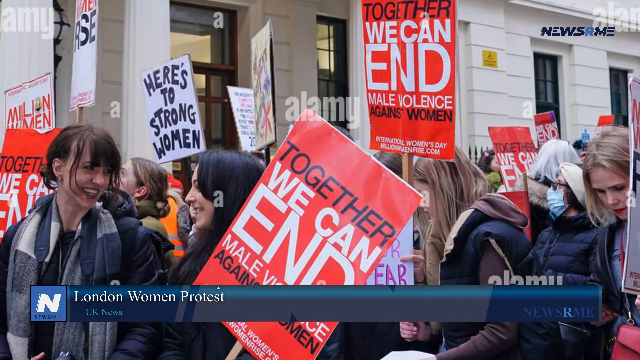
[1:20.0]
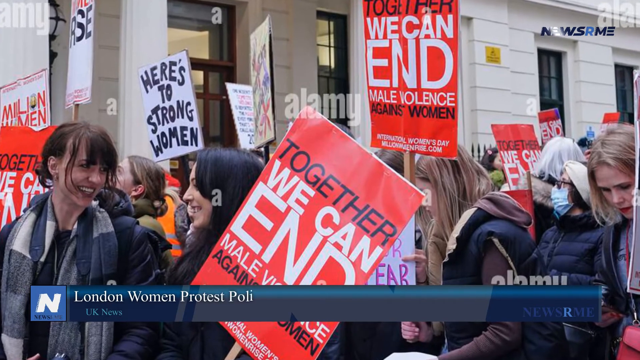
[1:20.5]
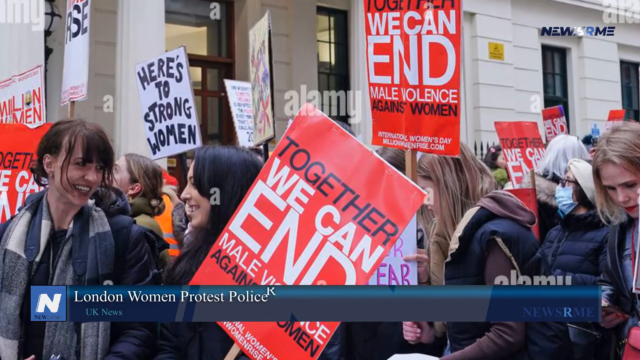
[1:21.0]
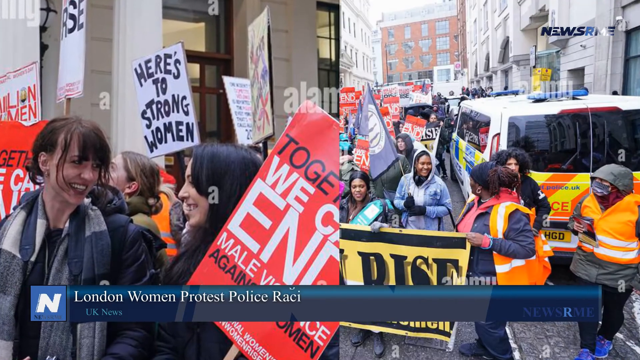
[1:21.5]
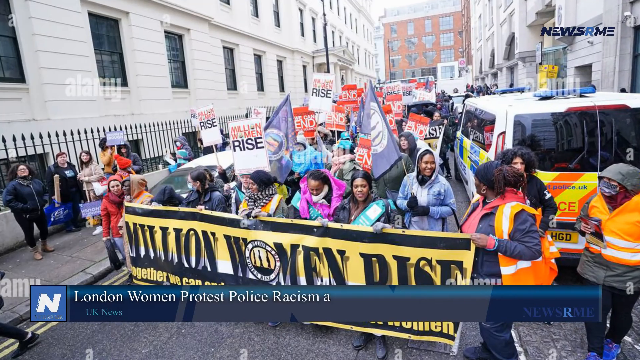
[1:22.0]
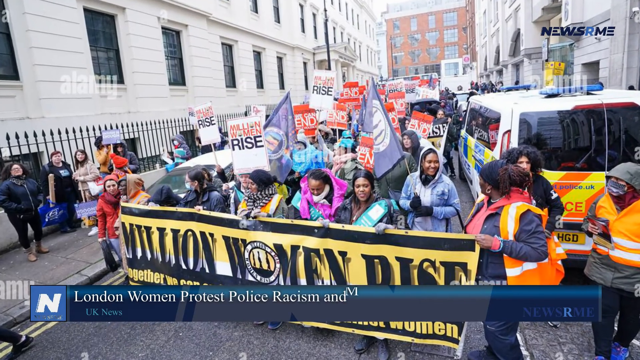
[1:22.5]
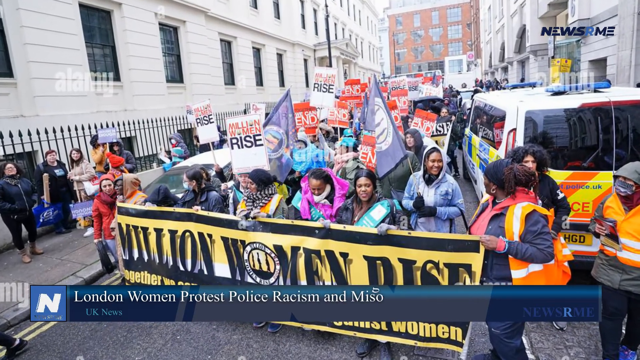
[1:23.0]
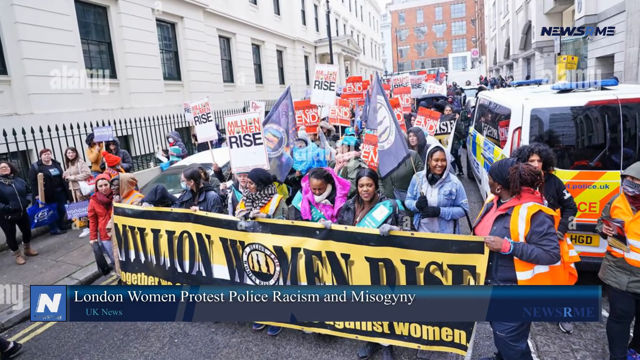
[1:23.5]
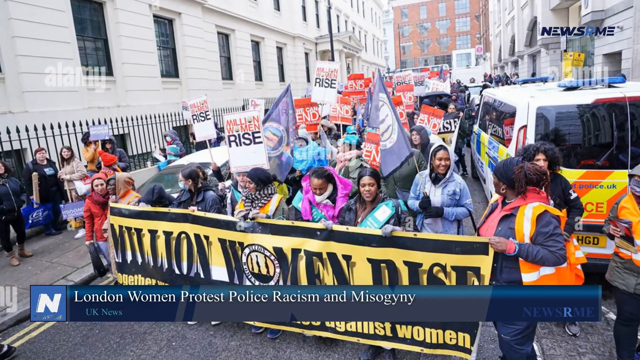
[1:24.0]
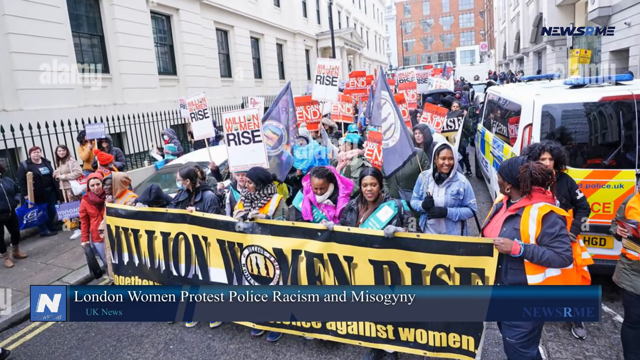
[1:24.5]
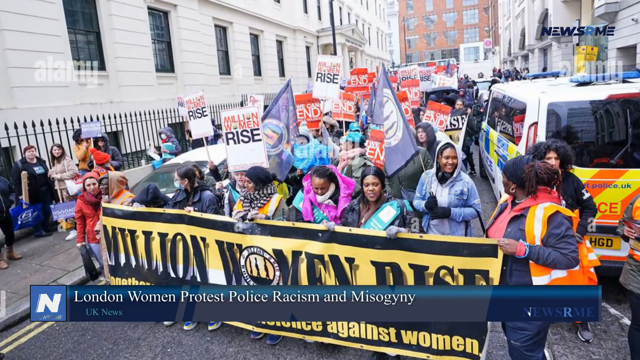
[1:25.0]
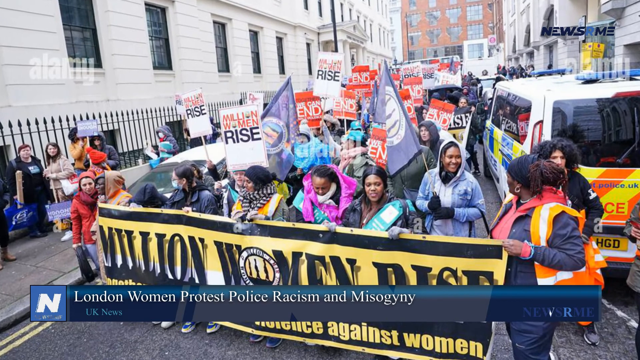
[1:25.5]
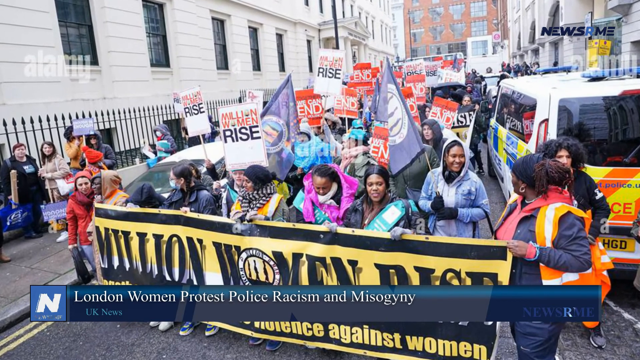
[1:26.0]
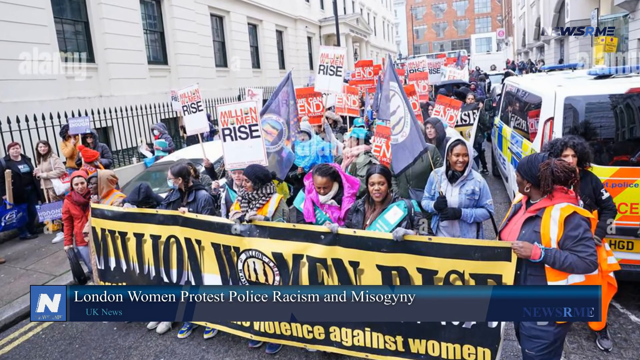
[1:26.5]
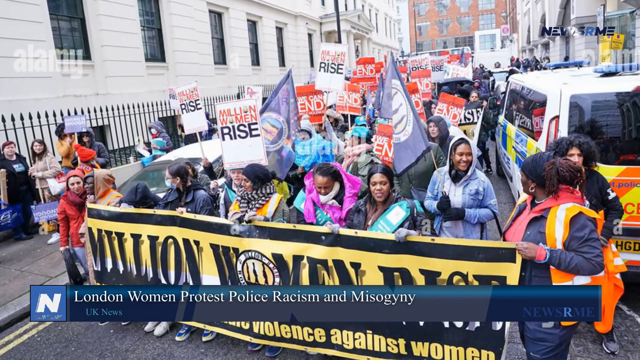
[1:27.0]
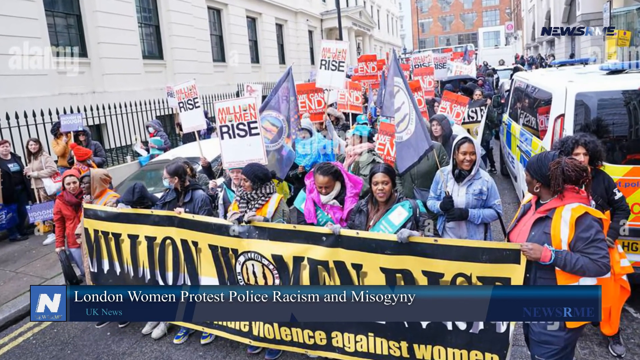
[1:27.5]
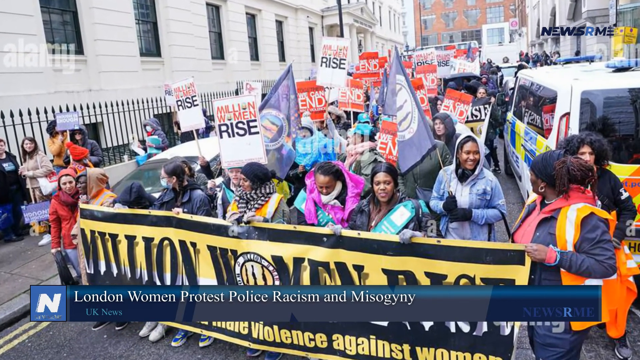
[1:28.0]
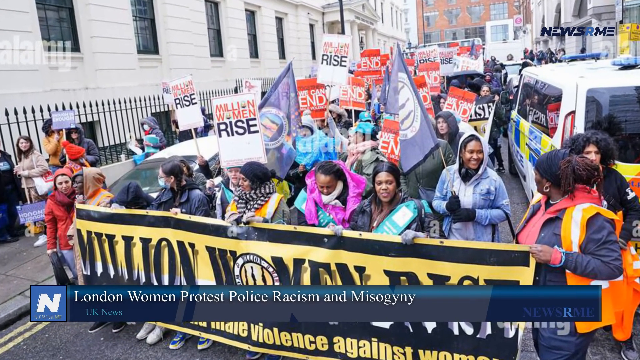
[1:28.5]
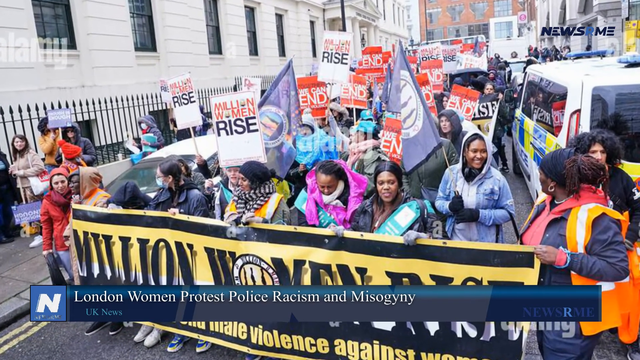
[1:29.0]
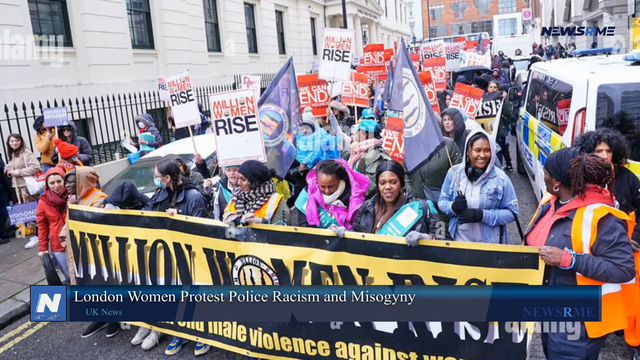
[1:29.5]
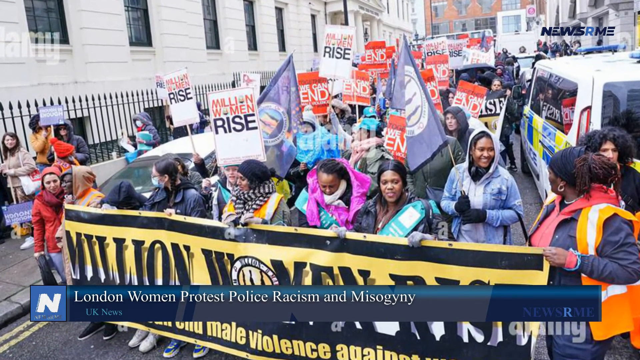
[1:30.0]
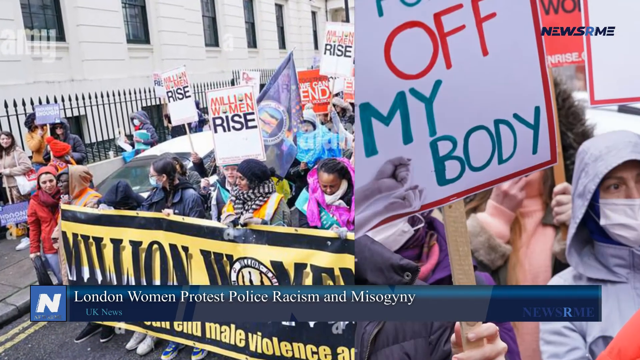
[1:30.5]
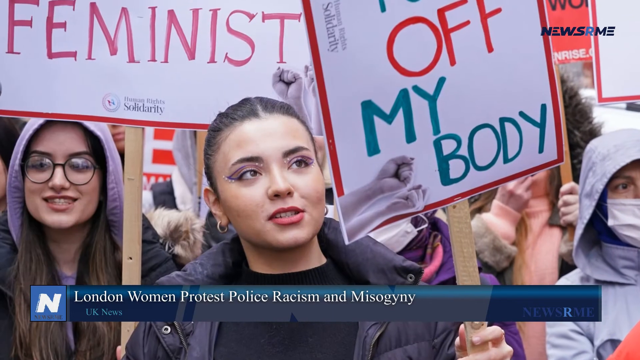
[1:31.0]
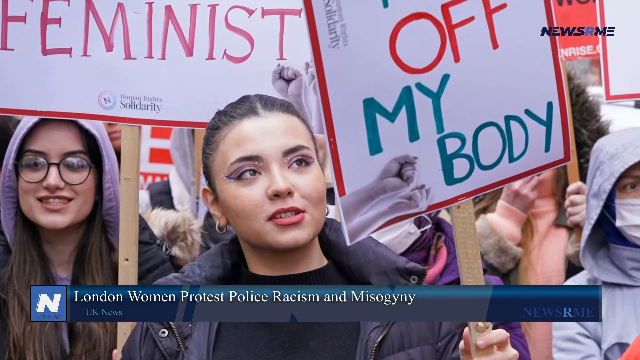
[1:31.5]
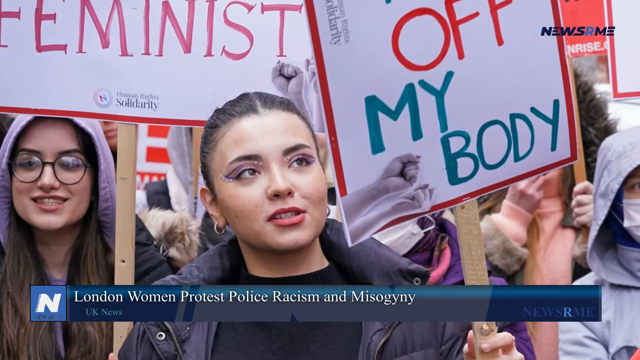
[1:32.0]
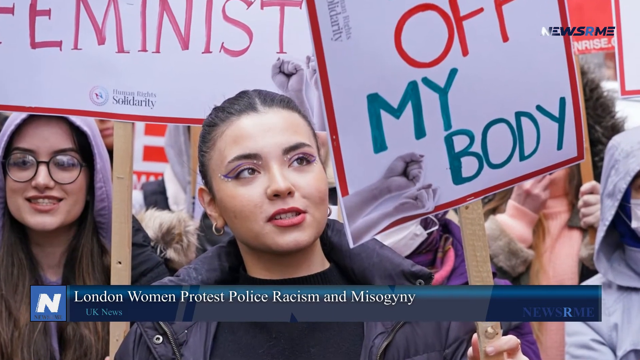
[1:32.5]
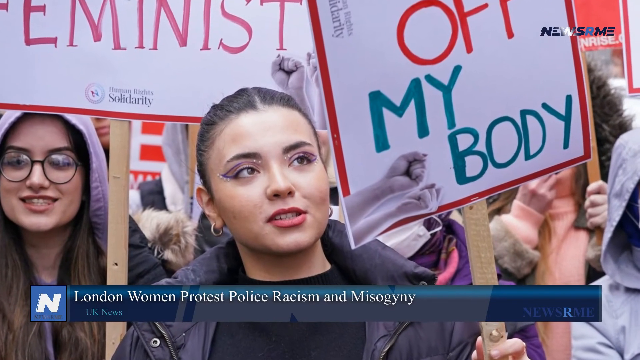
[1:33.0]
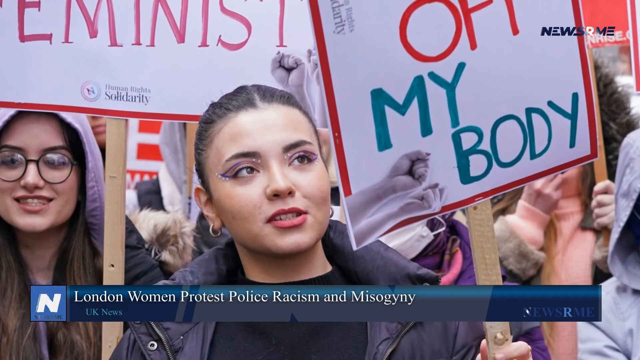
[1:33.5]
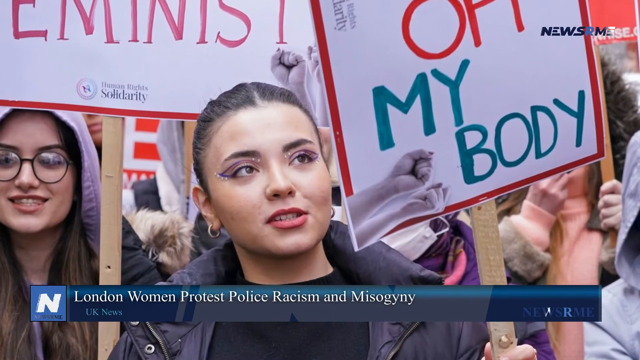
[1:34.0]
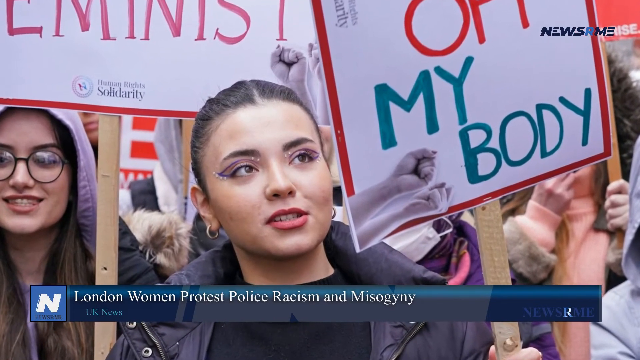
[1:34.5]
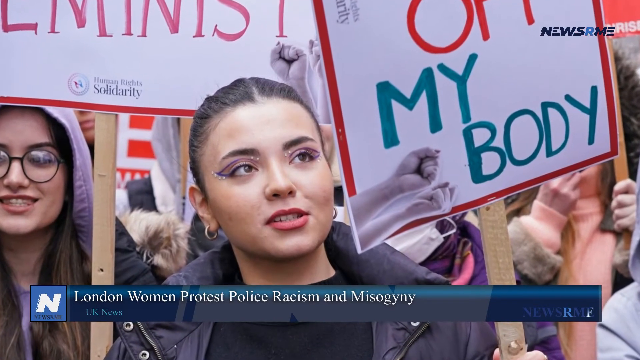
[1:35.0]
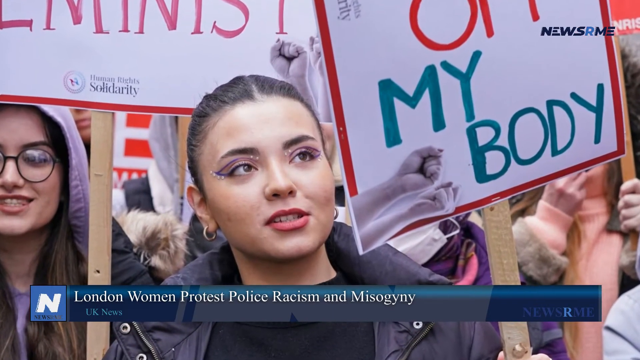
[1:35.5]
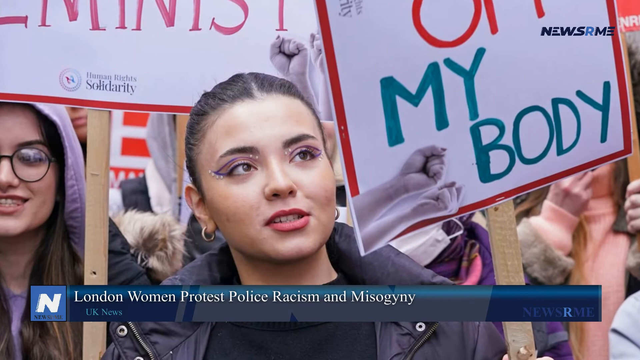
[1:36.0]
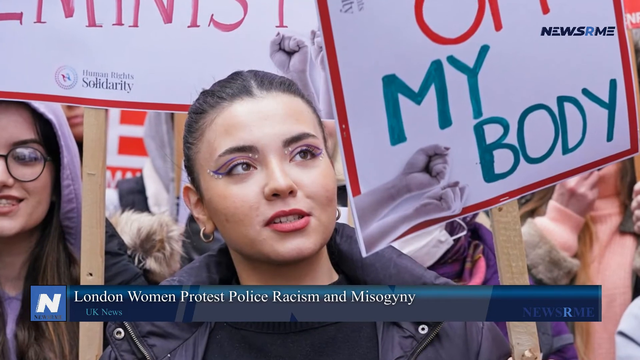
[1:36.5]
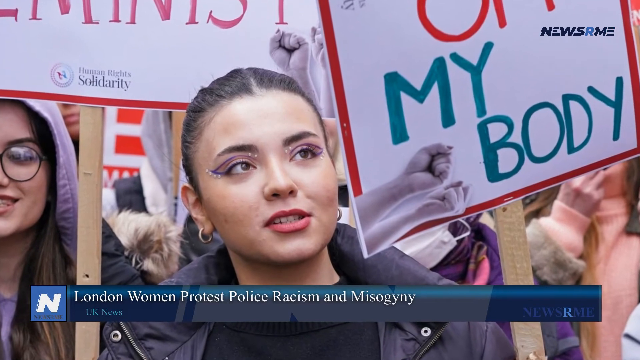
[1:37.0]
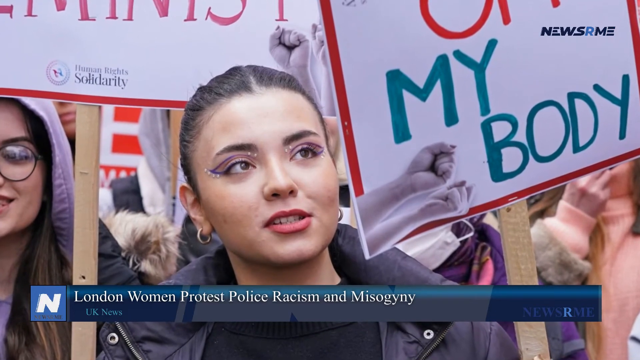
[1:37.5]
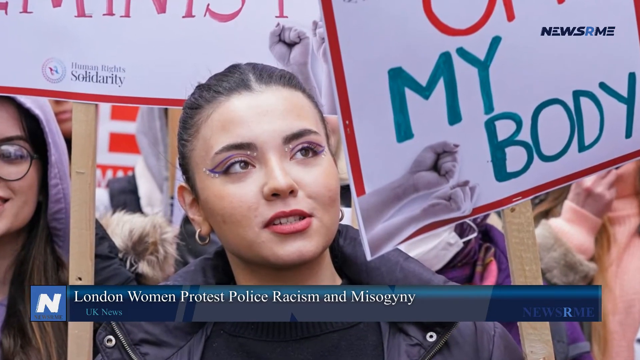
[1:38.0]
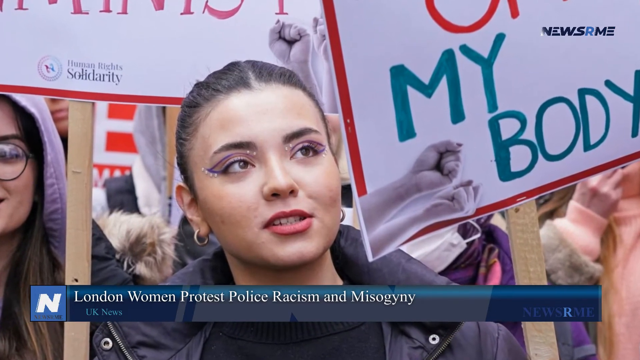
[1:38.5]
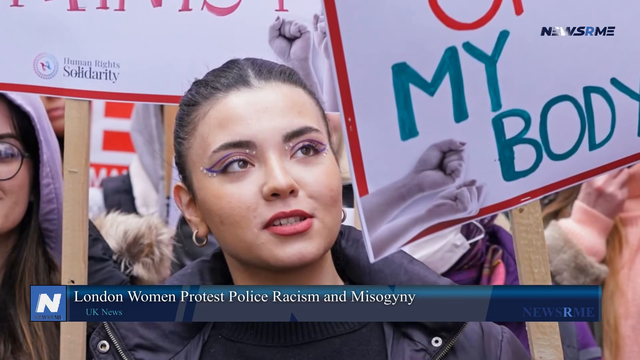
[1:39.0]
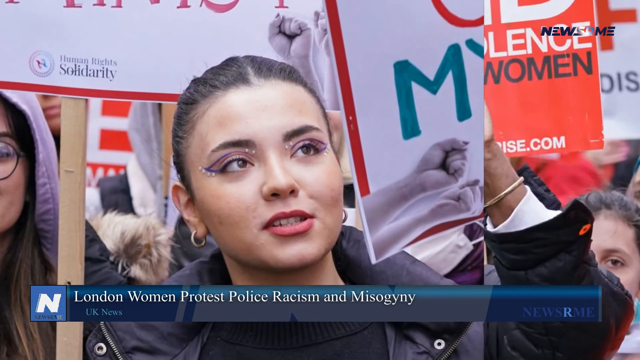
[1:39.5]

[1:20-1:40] Three or four more photos from the women's protest appear, including one that has been repeated maybe a couple of times, which was in the first part of the video and is shown yet again. The women carry signs; some have the red background about ending male violence against women, and others have more hand-done designs, such as one reading "here's to strong women." In these shots, the police station is in the background, with a metal fence topped with small spikes that is repeated all the way in front of the building. Another still image possibly shows the front of the march, with several people carrying a banner that reads "million women rise"; the banner is apparently yellow with blue text. It appears to be a cold day in London, with many people wearing jackets and some wearing scarves. Another image apparently shows a police van to the side, its lights not on, parked on the street as the women march along the street.